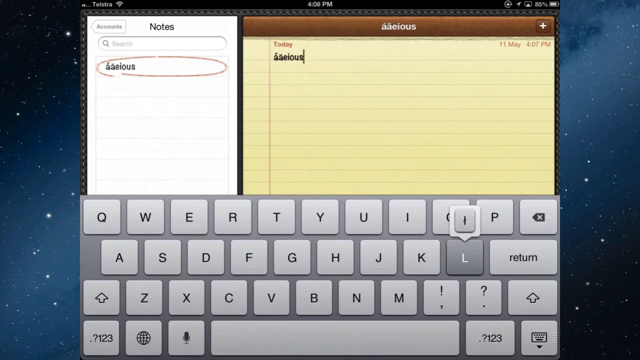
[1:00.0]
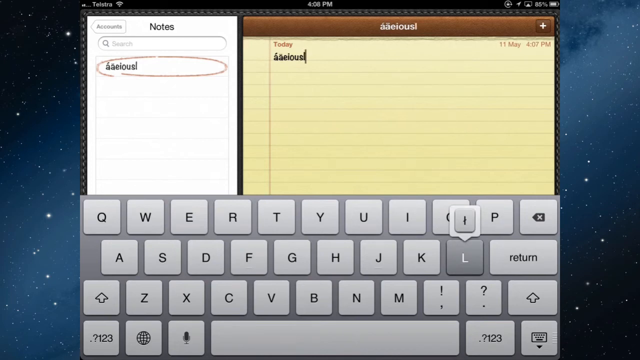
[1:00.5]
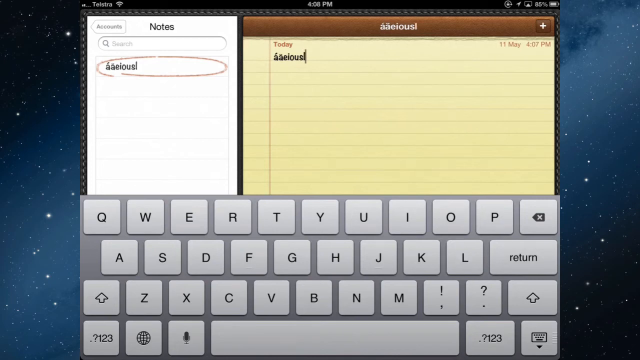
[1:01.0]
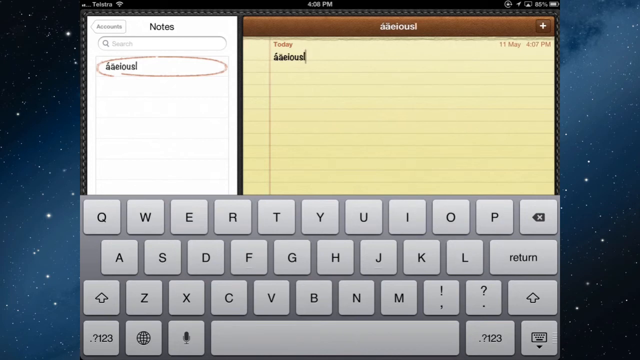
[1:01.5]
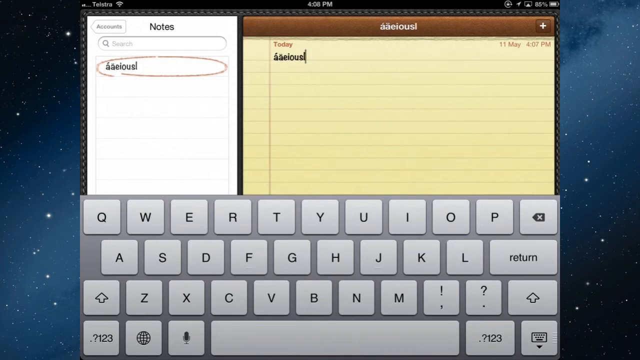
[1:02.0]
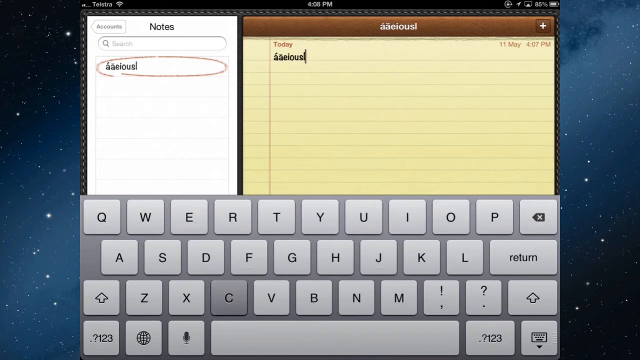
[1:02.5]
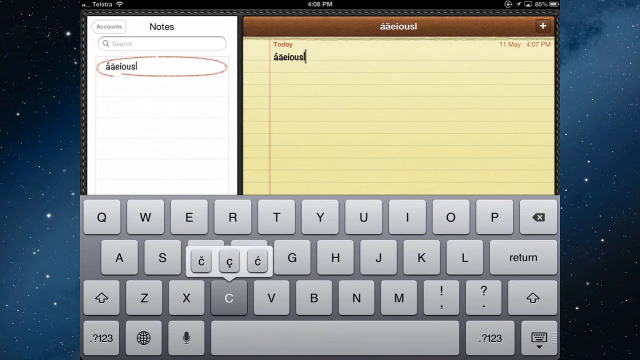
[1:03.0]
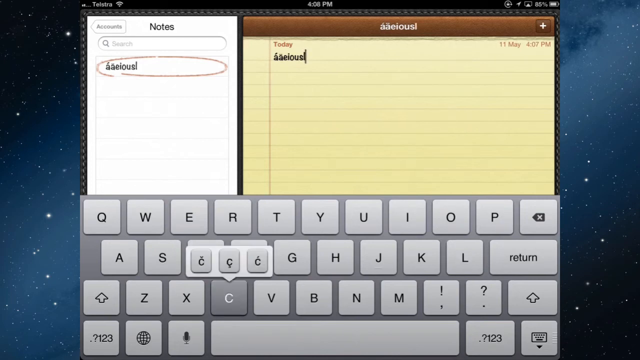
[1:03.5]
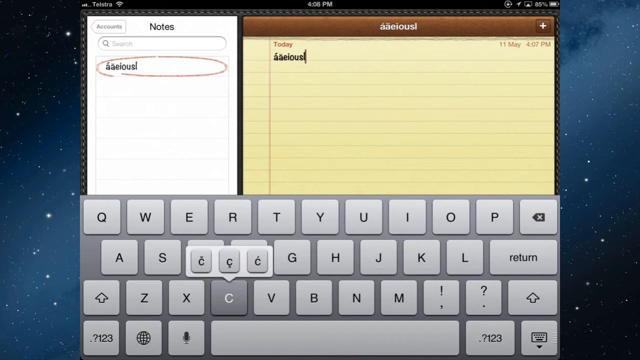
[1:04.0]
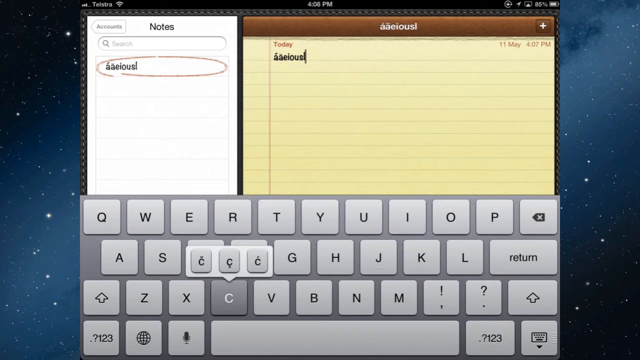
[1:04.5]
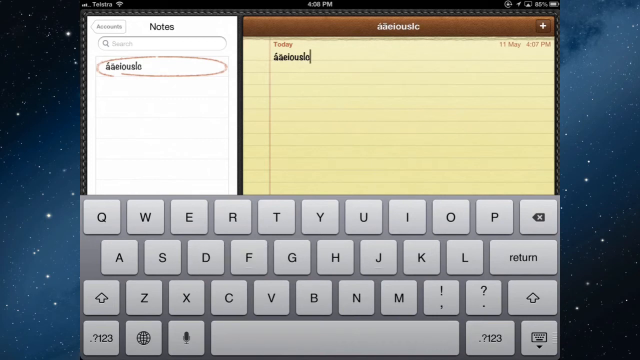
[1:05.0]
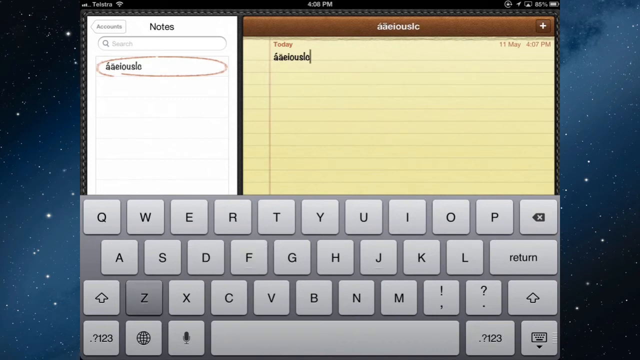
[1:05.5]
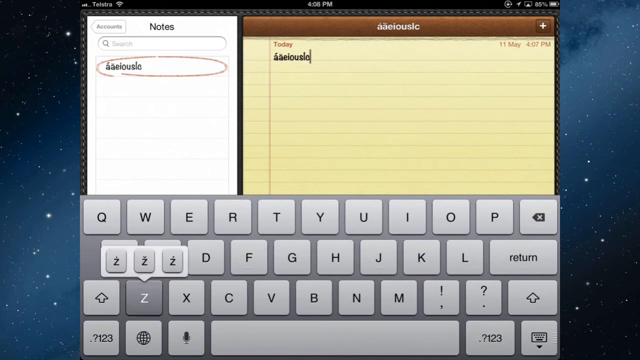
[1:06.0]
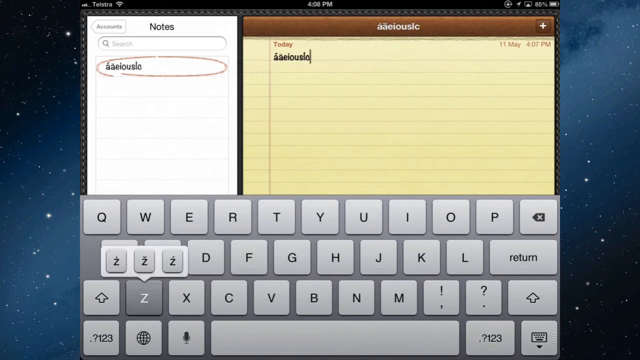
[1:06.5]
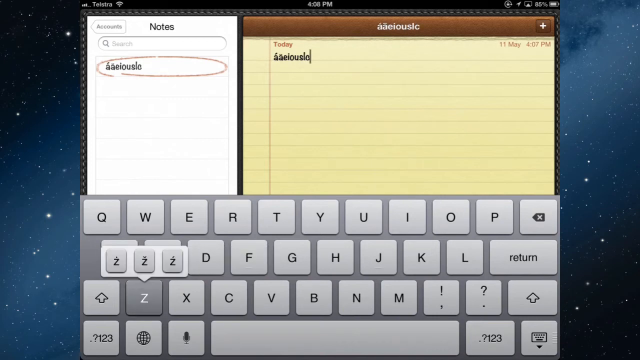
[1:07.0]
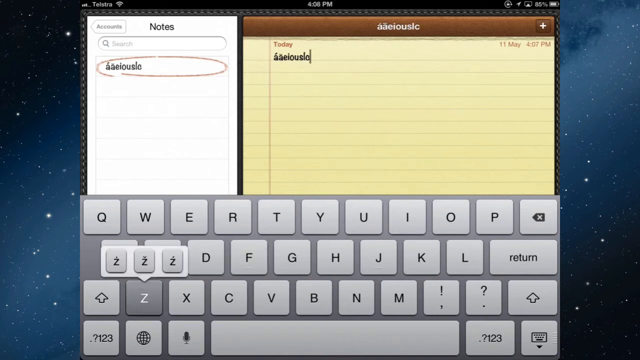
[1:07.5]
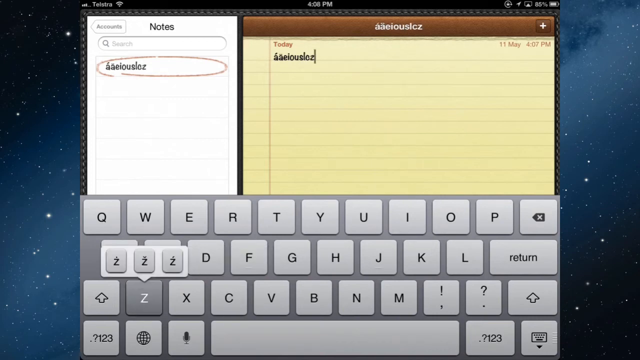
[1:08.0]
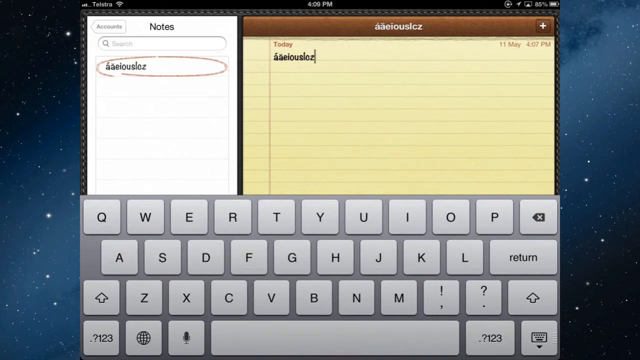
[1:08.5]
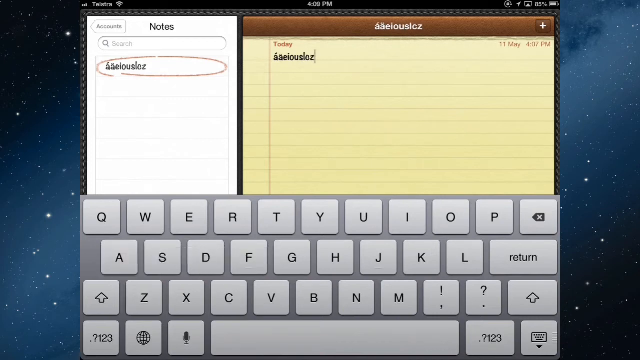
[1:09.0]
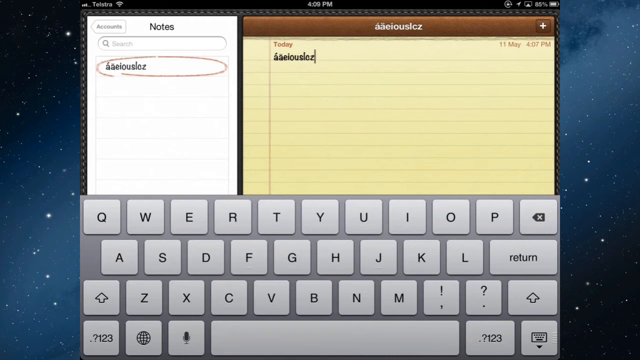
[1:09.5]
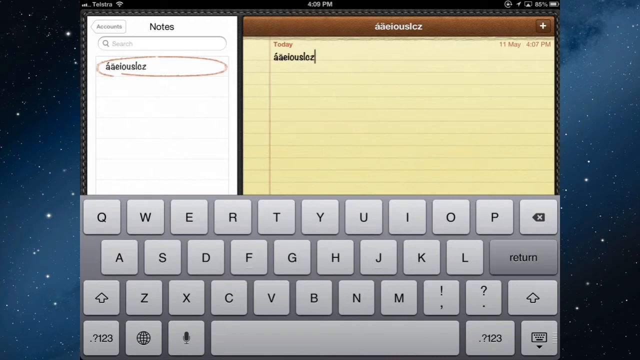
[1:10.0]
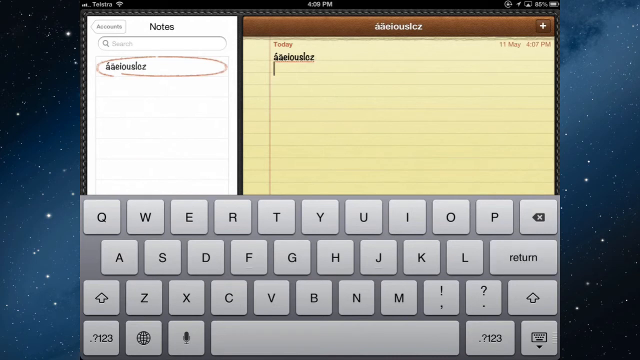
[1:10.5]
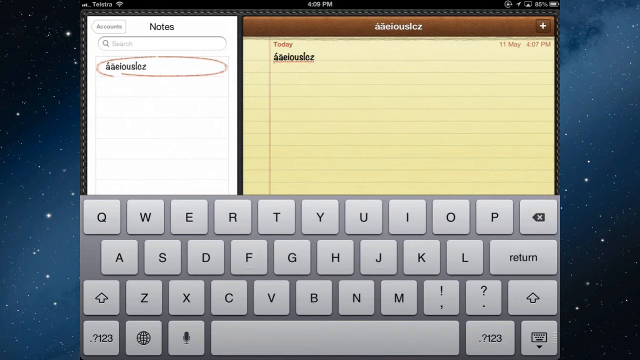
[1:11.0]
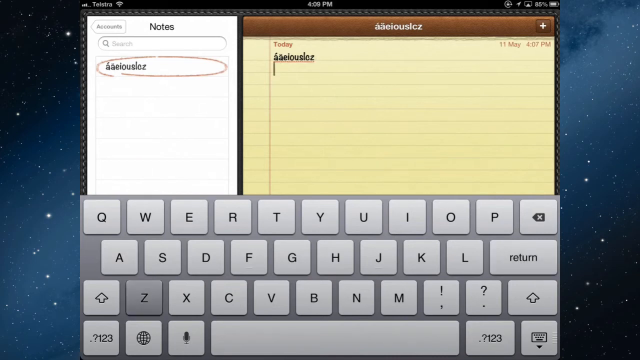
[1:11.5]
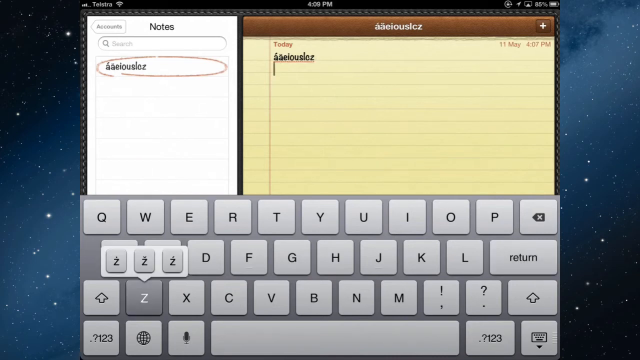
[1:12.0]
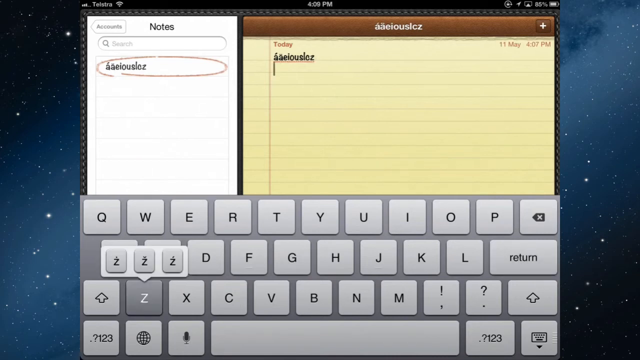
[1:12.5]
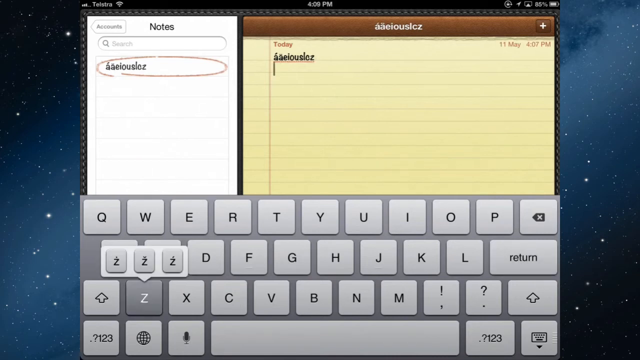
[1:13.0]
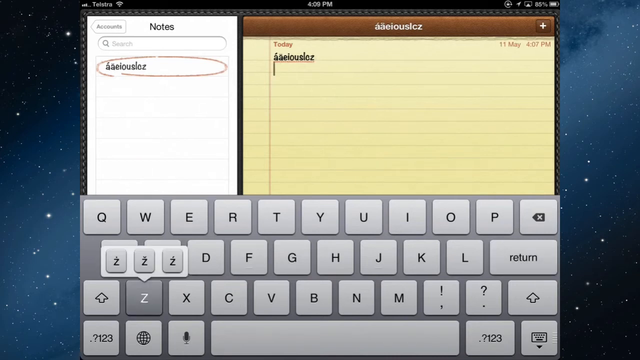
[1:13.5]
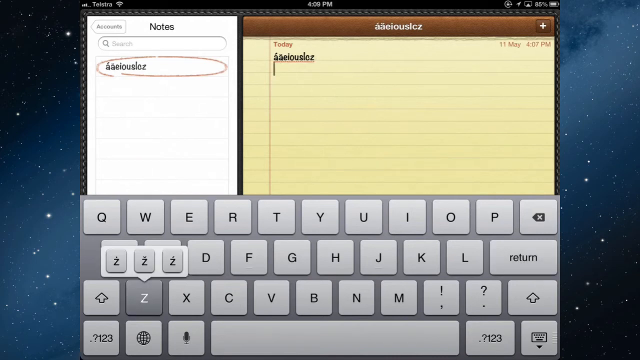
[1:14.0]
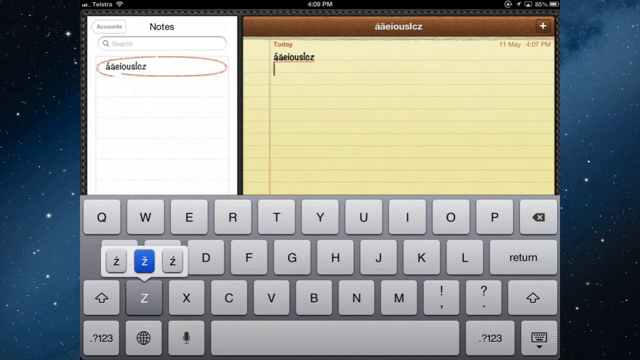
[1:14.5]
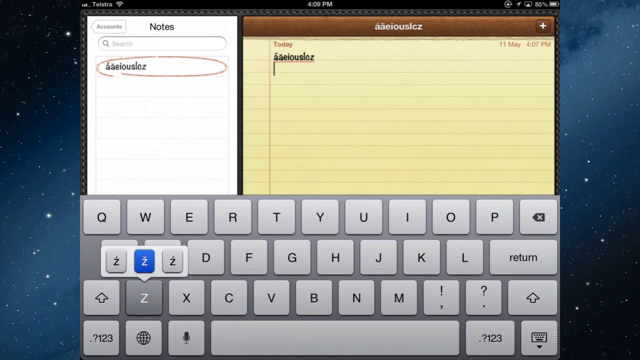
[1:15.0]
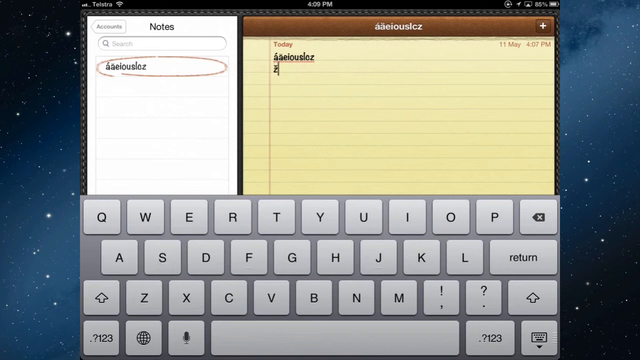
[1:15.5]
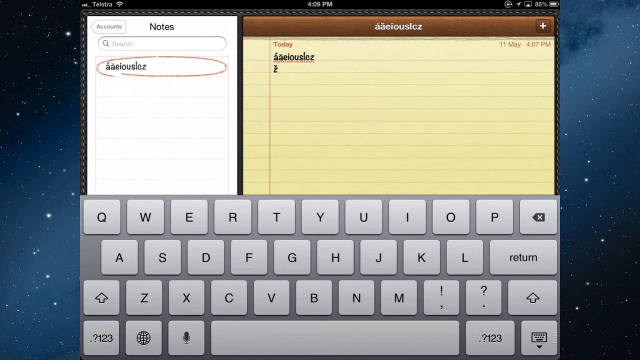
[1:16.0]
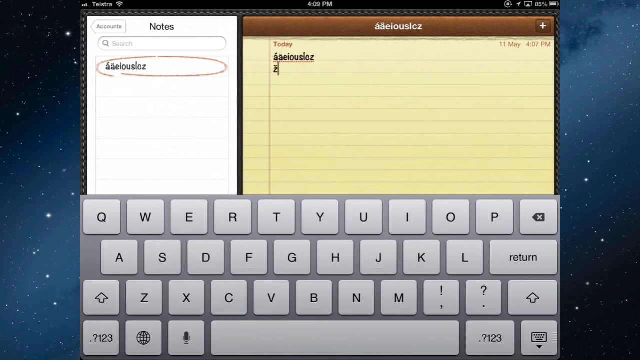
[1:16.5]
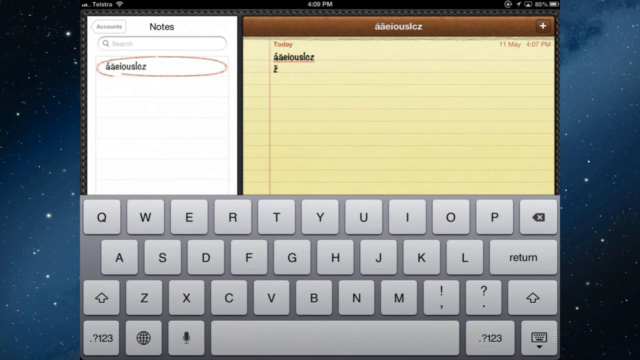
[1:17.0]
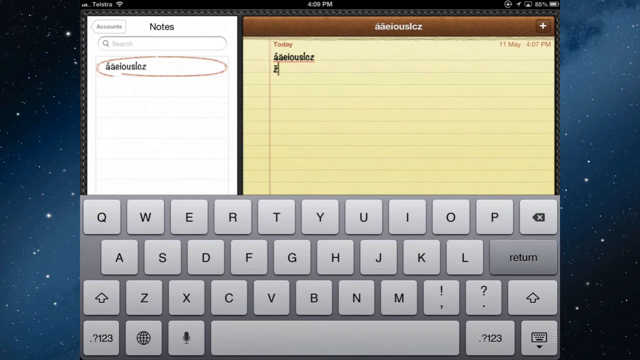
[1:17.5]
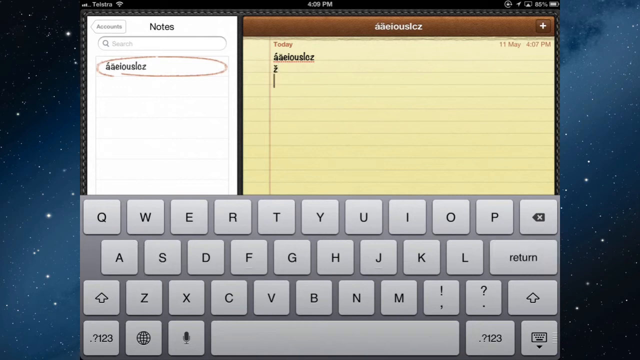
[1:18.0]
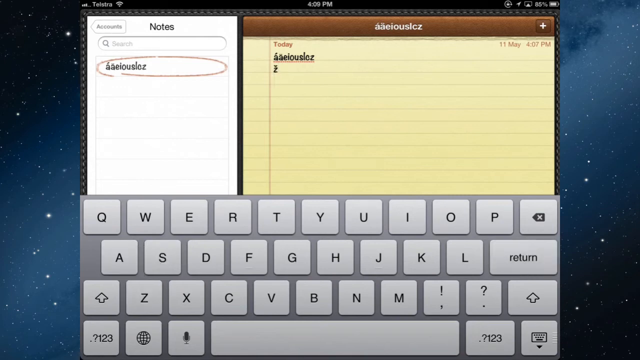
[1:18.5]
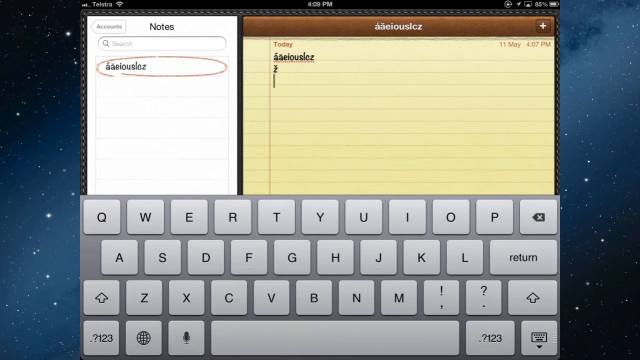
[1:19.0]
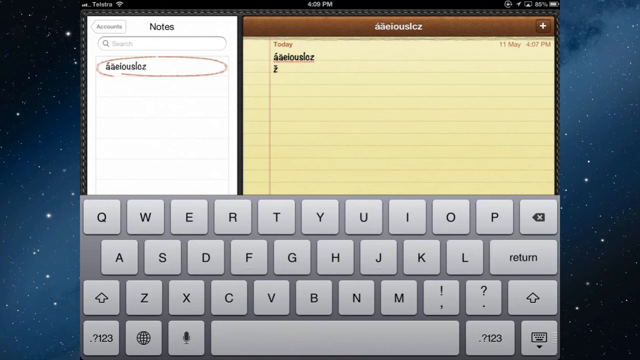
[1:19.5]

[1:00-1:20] A computer-generated notepad with yellow pages and a brown border at the top is shown, with a smaller notepad with white pages on the left and a gray keyboard underneath. The user seems to be typing and selects the letter C, and a menu pops out above it showing many C's with different lines on them. The user continues typing and more letters appear on the notepad. Next Z is selected and another menu appears above it. The user hits the return key, goes back to selecting Z, and when one of the options from the menu is selected the key turns blue and the selected letter is written again on the yellow notepad. The user clicks return again and the cursor goes down to the third line.